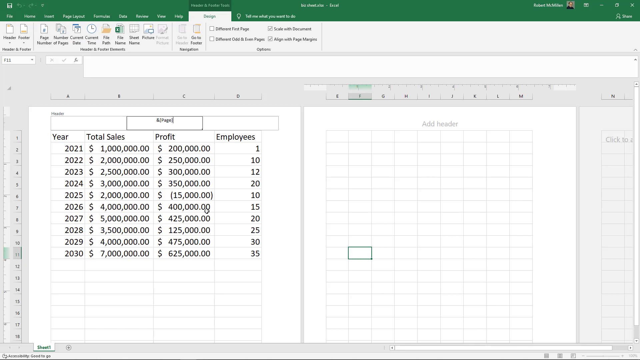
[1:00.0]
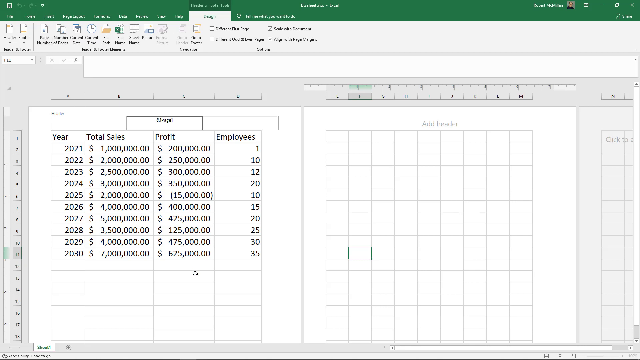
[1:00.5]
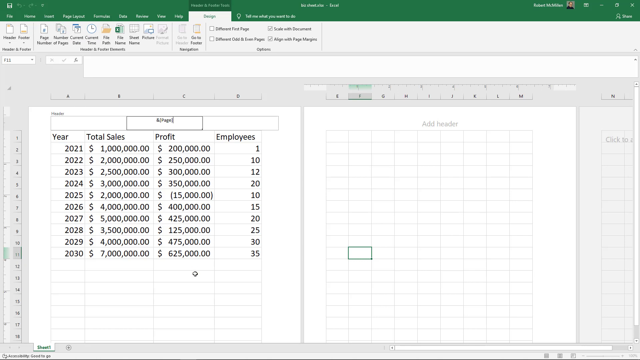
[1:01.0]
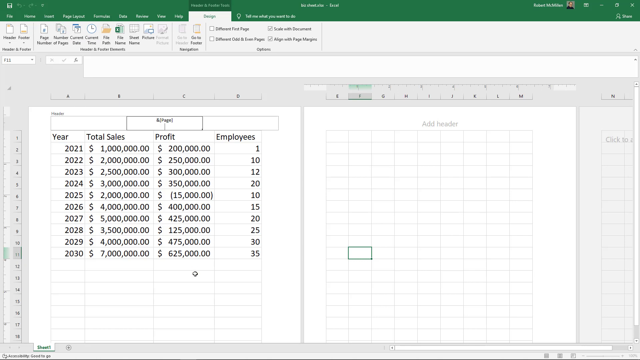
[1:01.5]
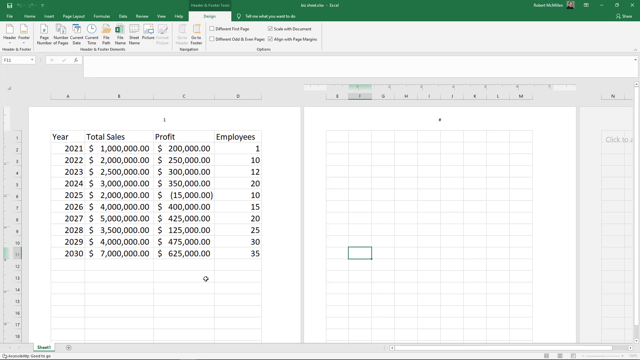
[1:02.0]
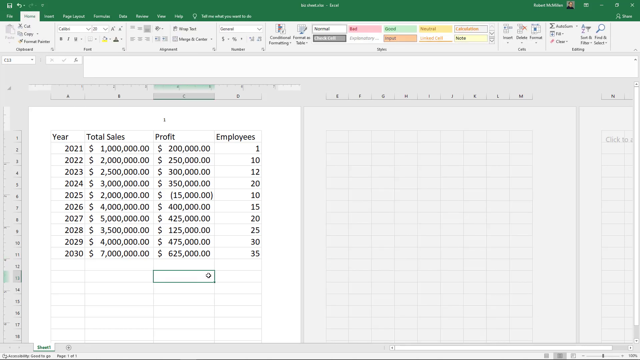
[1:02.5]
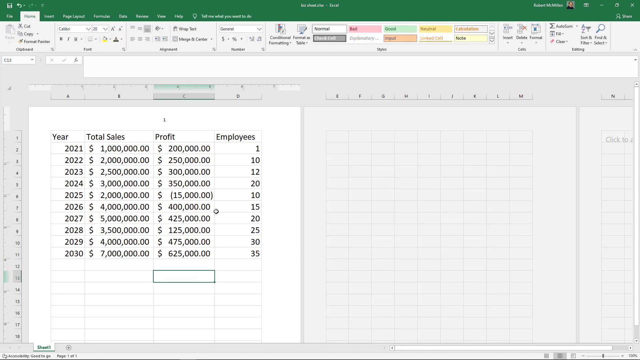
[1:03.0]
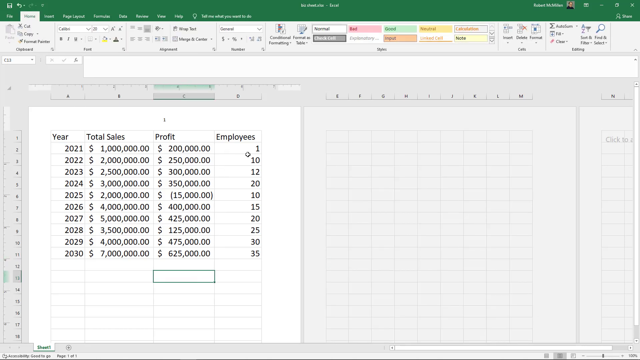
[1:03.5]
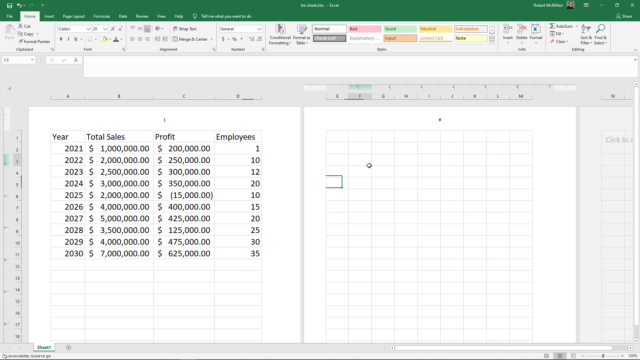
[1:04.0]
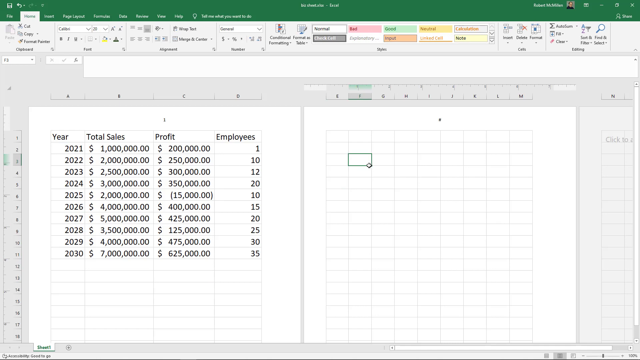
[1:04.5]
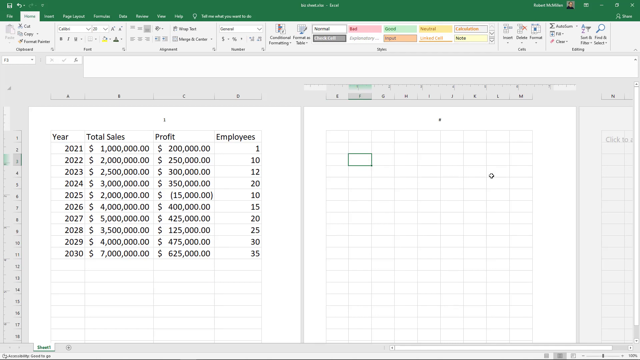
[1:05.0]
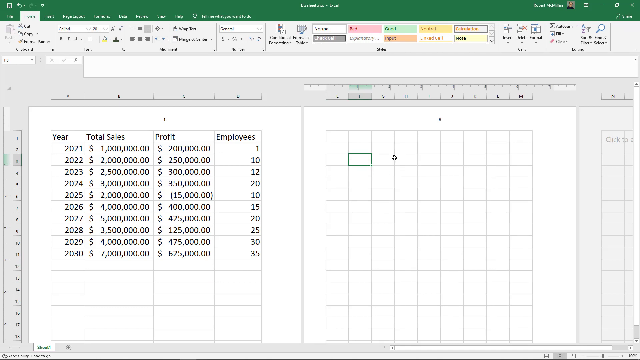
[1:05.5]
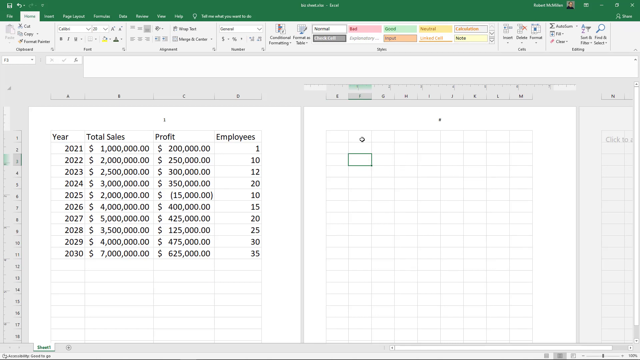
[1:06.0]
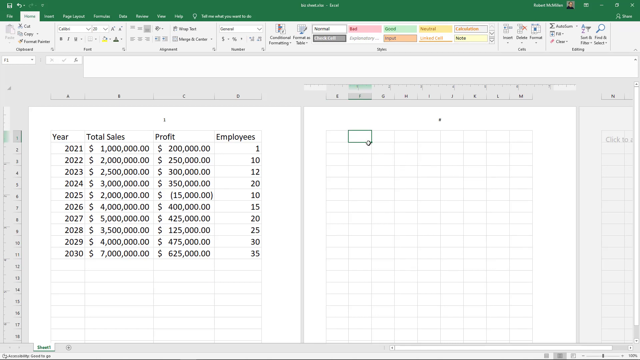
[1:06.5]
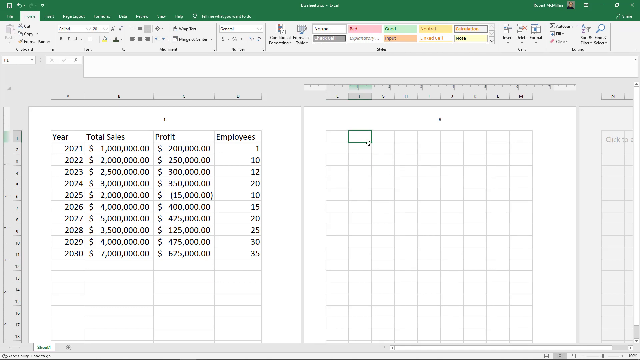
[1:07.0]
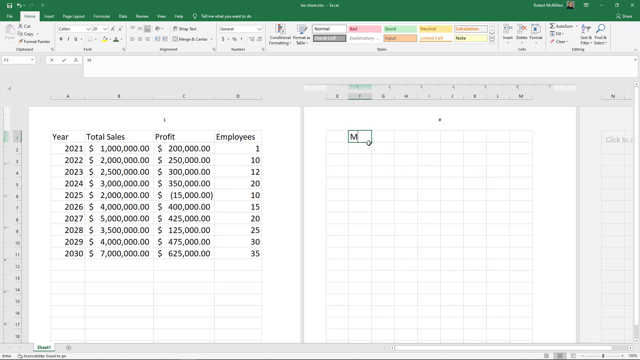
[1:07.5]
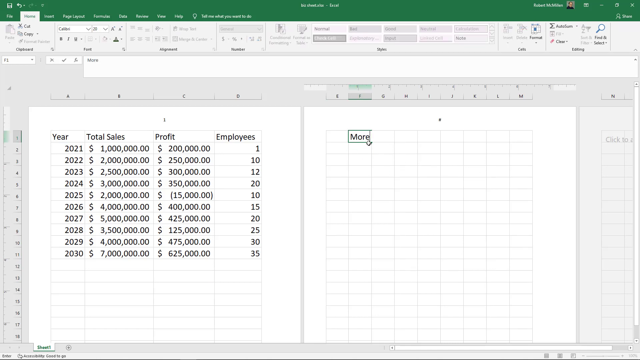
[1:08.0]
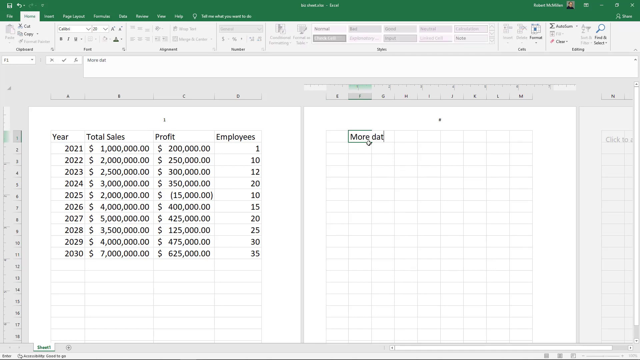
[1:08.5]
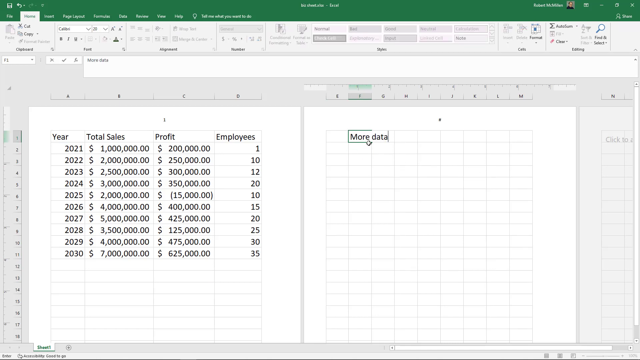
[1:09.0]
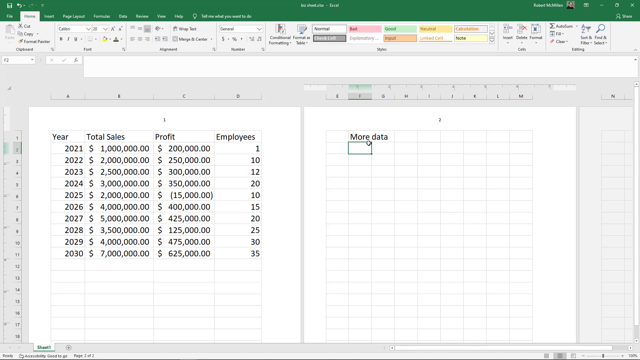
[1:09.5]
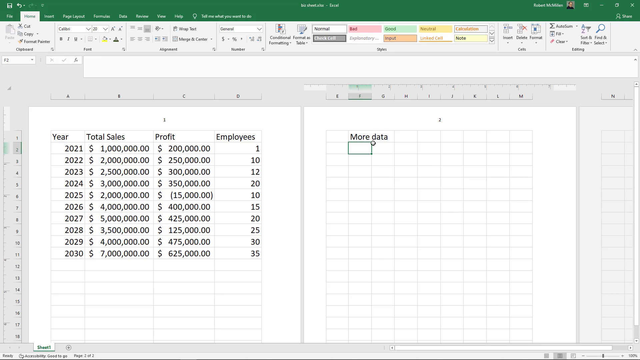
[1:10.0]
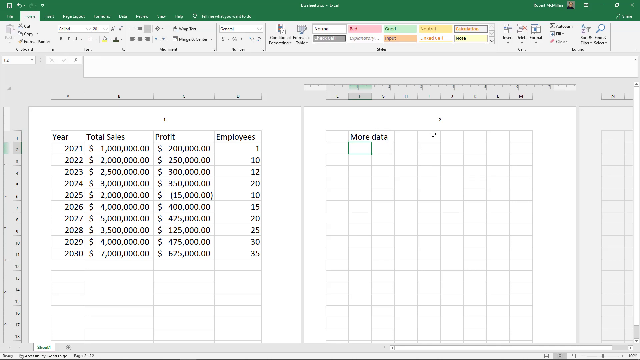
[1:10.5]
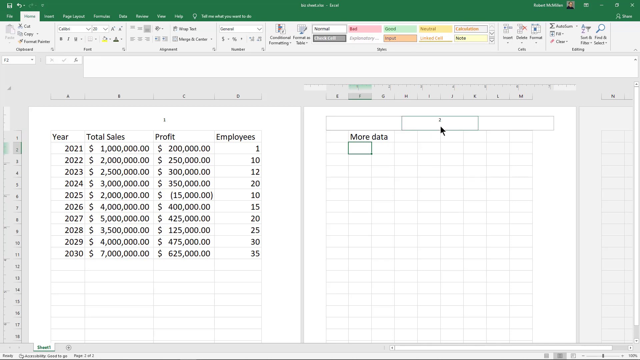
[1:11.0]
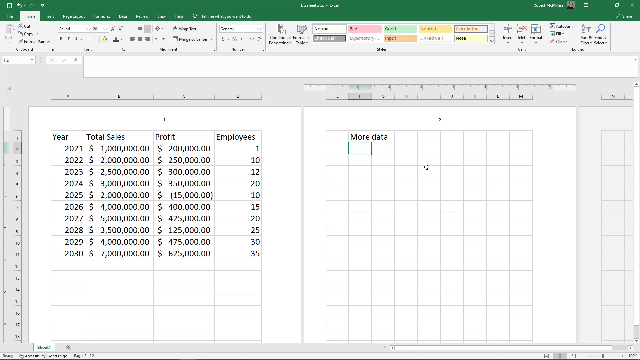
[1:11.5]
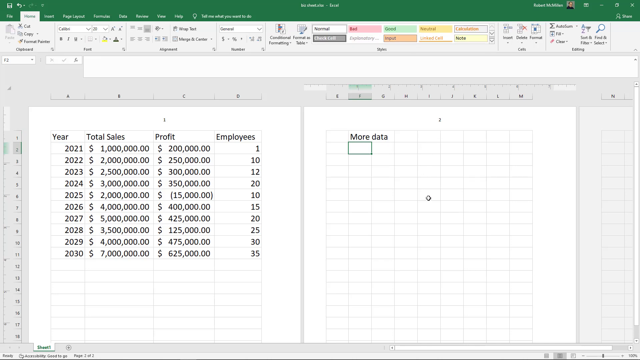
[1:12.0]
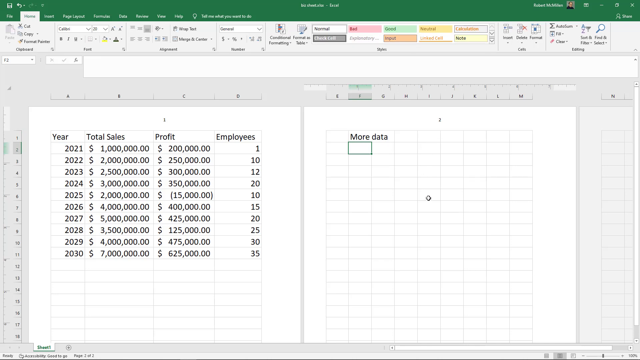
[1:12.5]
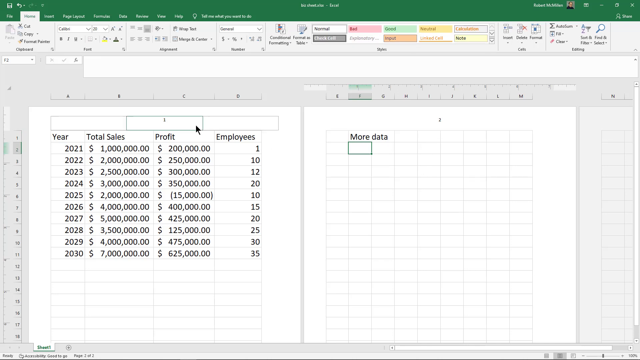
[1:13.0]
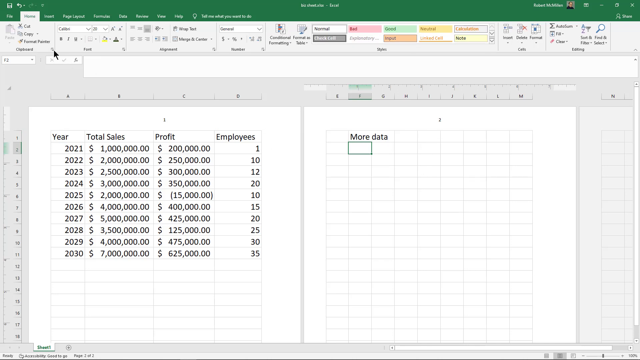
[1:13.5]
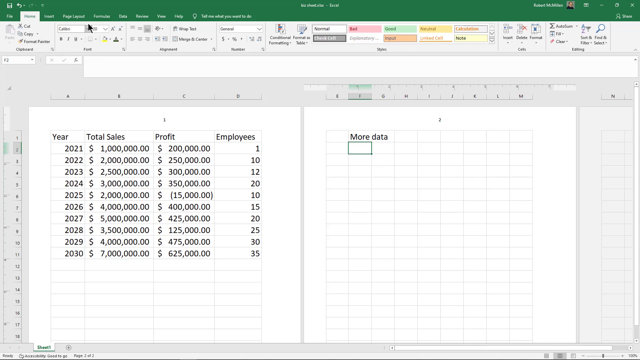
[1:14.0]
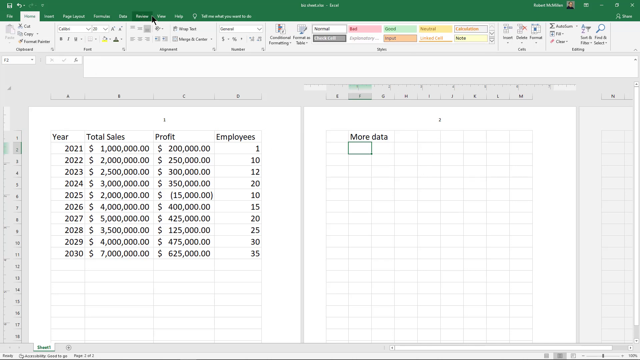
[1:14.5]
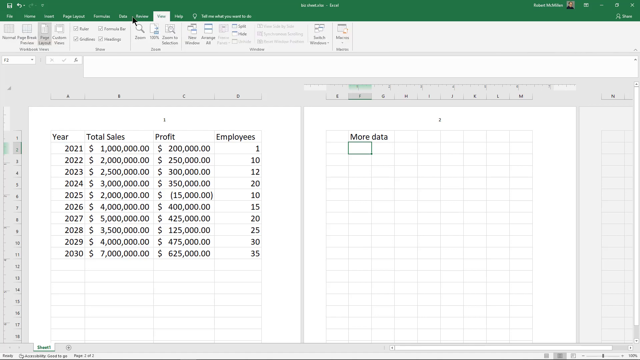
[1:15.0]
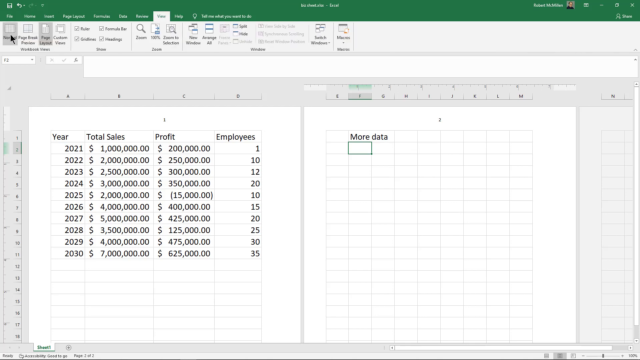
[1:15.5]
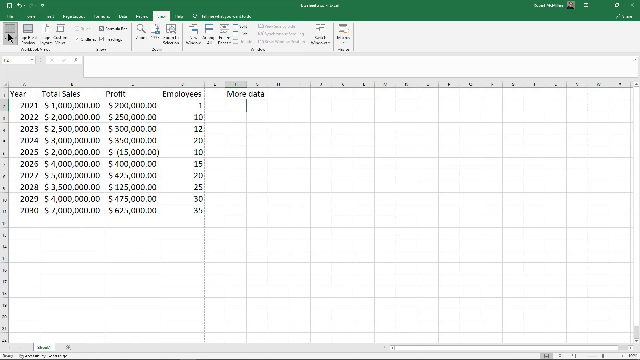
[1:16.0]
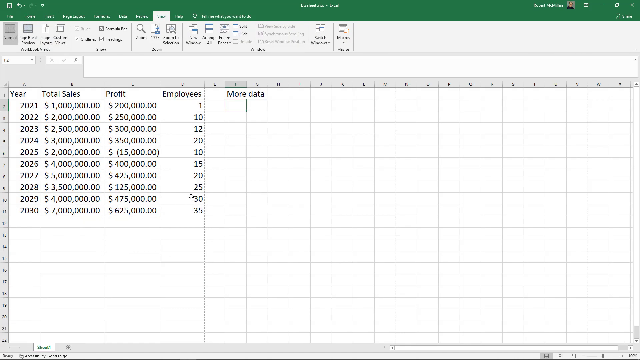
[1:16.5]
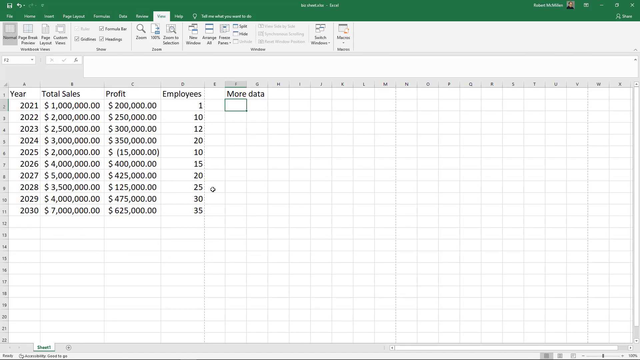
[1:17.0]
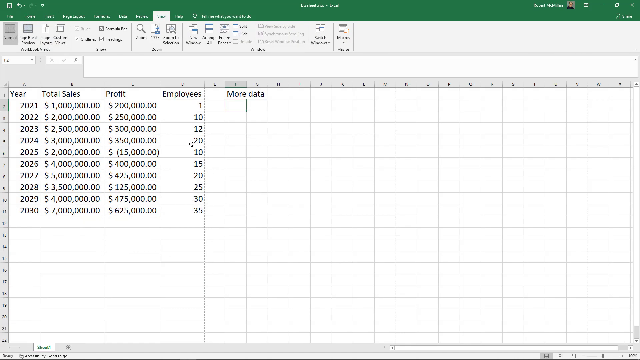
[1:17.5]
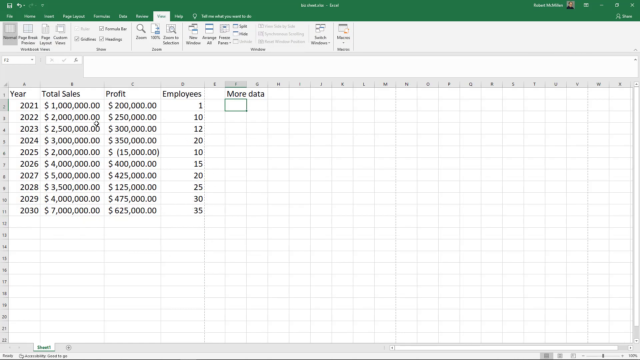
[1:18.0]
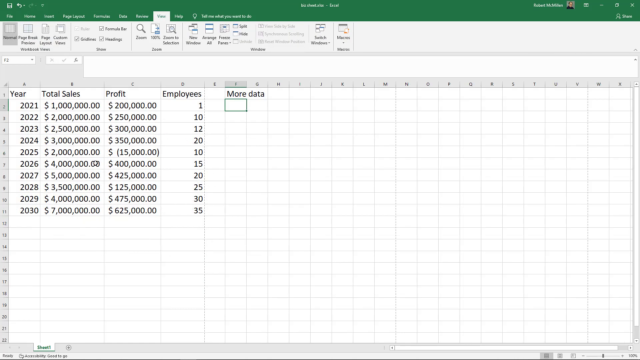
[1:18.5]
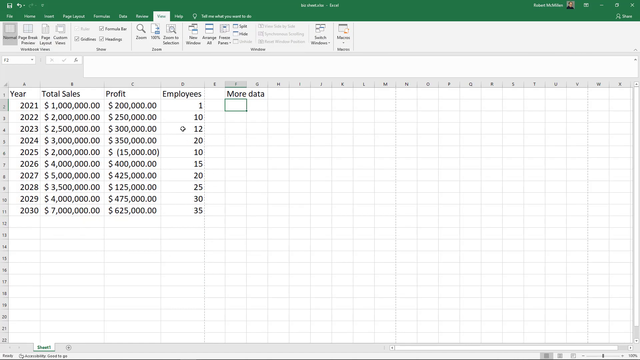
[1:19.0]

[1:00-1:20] A spreadsheet is split in half. The left side seems to be filled all the way to the 11th line, and the spreadsheet on the right is completely empty. The user clicks on one of the boxes on the right side, which seems to get highlighted, and types "more data" in black text, then goes to the second cell and clicks on another cell. The cursor moves to the menu at the top, which has a green bar with more options with icons underneath. The user clicks on one of them, and the spreadsheet is back together, no longer split into two. Its categories are "year", "total sales", "profit" and "employees", and the years run from 2021 down to 2030.